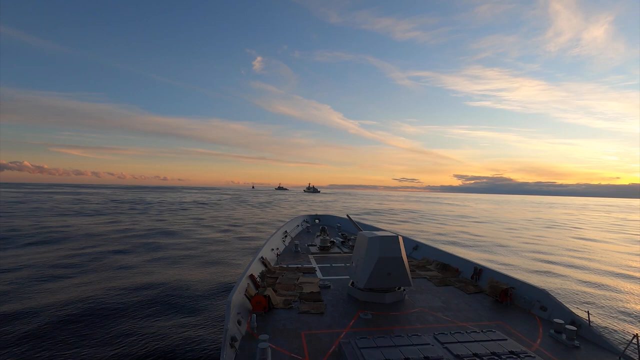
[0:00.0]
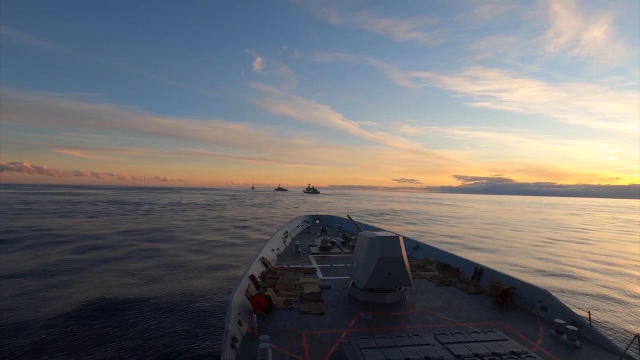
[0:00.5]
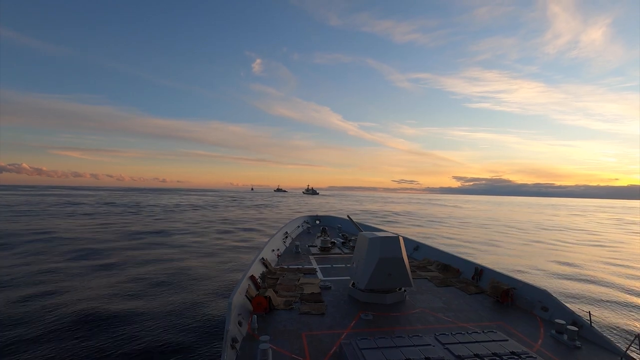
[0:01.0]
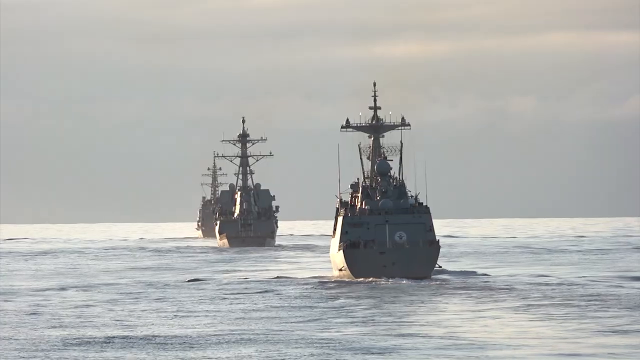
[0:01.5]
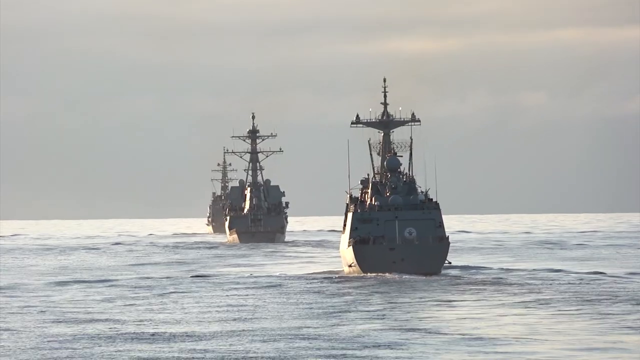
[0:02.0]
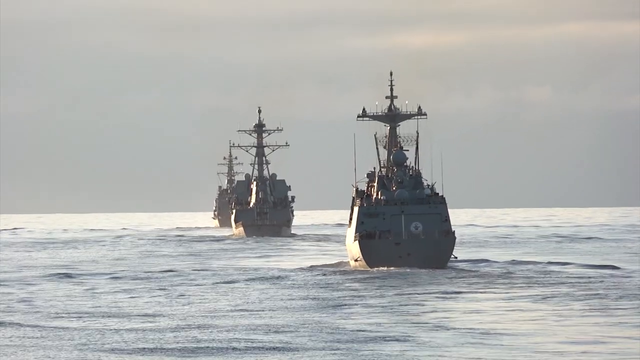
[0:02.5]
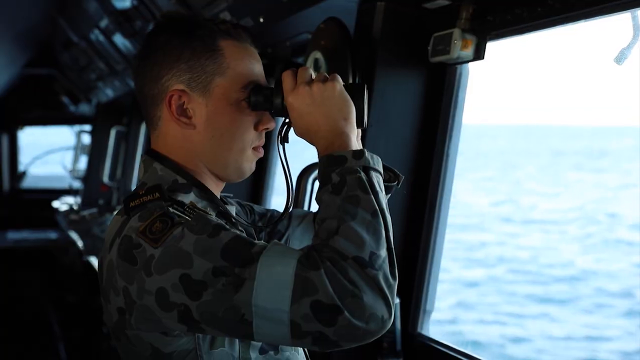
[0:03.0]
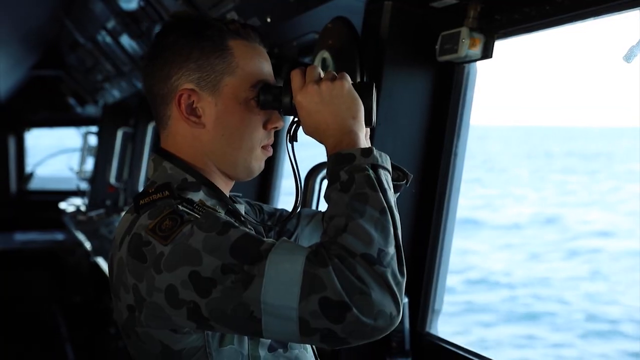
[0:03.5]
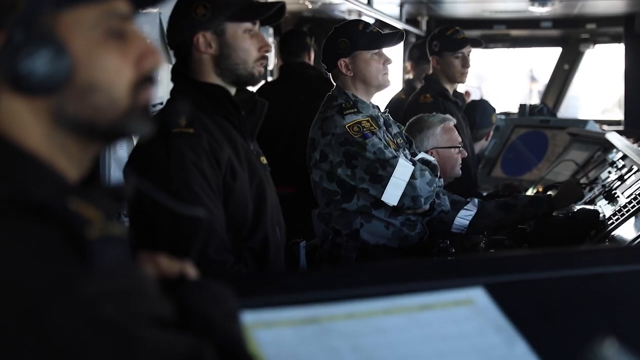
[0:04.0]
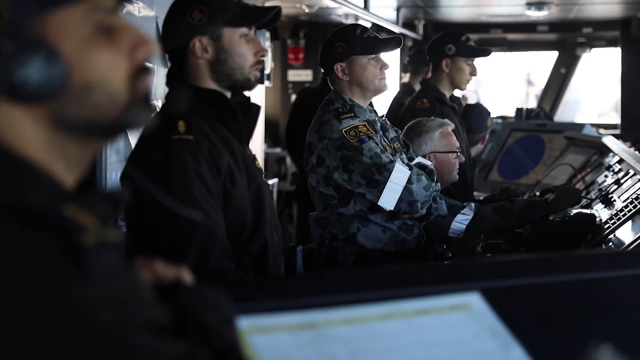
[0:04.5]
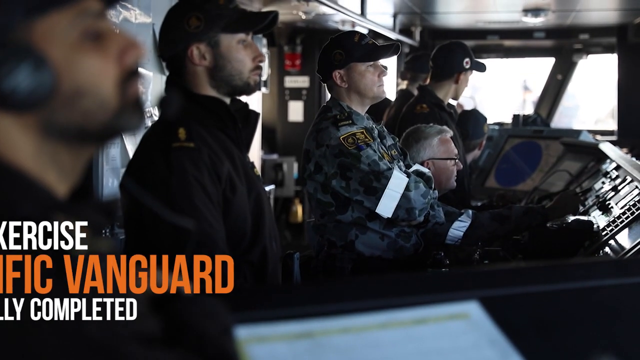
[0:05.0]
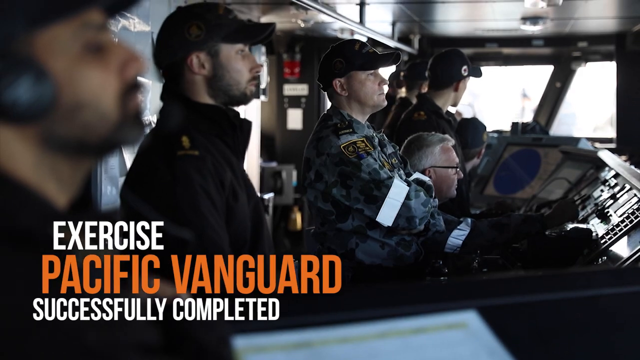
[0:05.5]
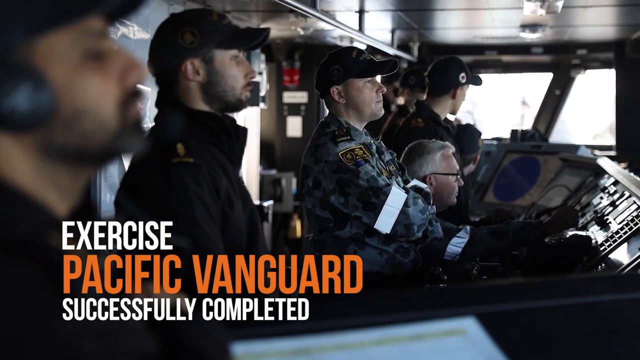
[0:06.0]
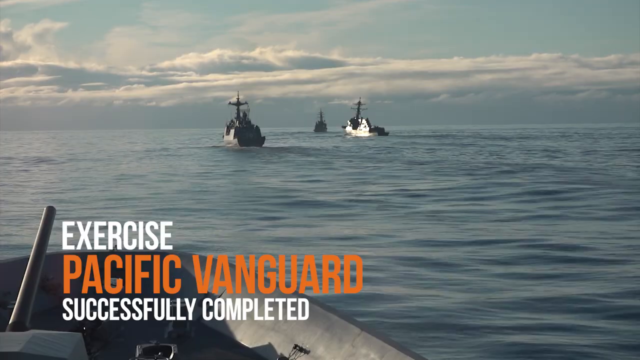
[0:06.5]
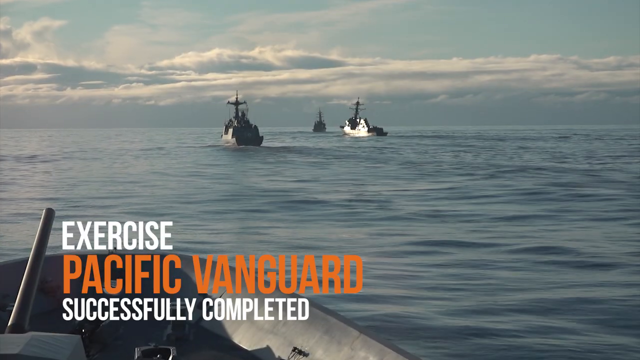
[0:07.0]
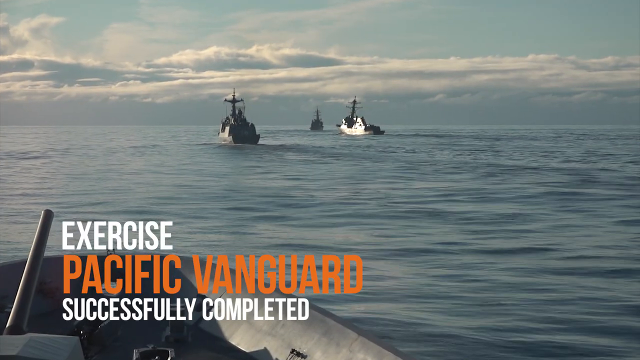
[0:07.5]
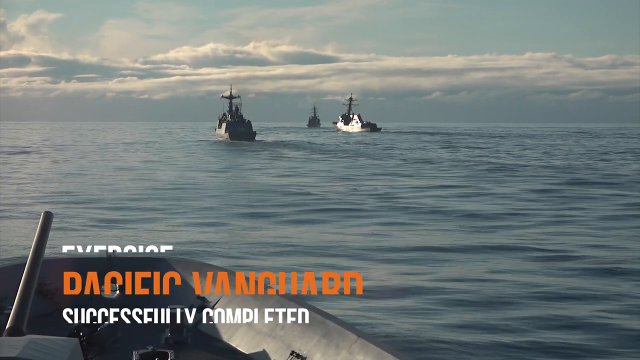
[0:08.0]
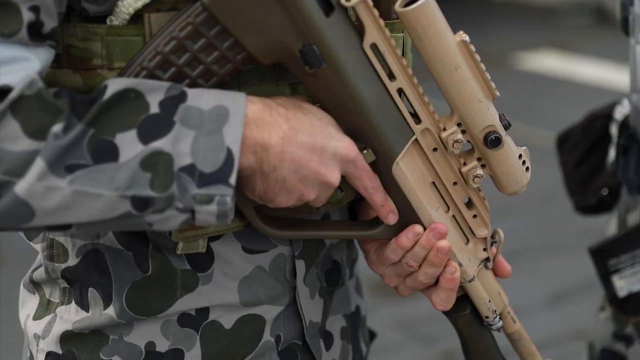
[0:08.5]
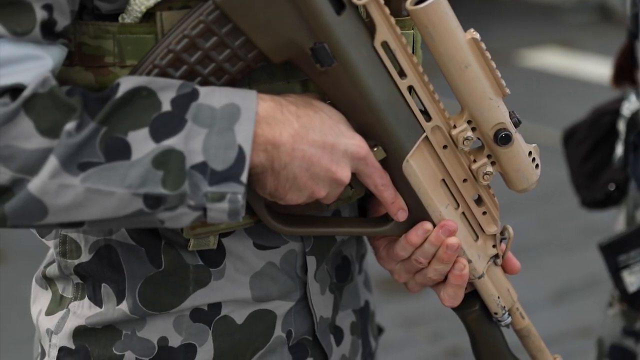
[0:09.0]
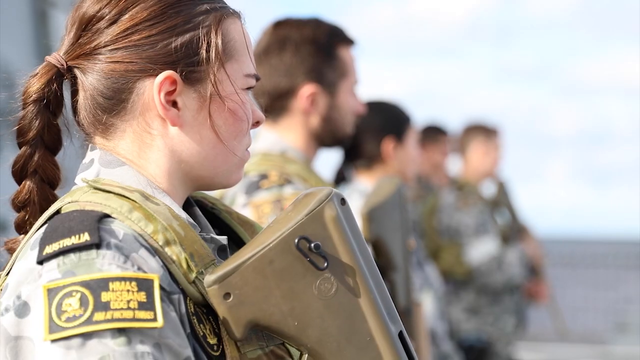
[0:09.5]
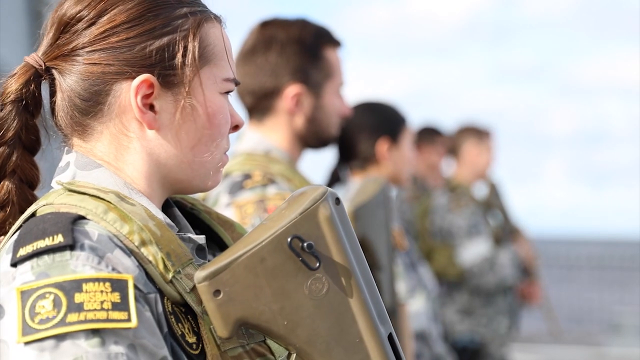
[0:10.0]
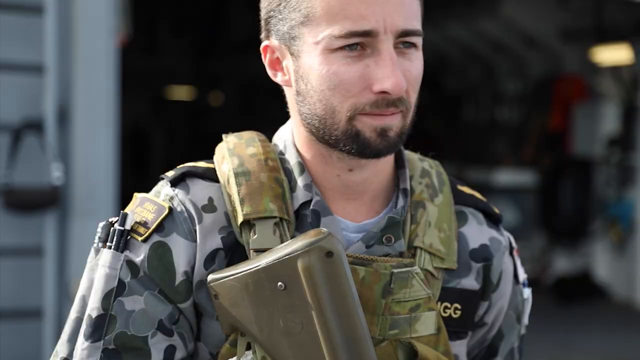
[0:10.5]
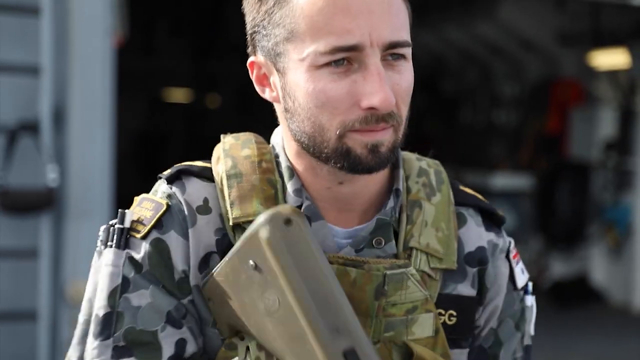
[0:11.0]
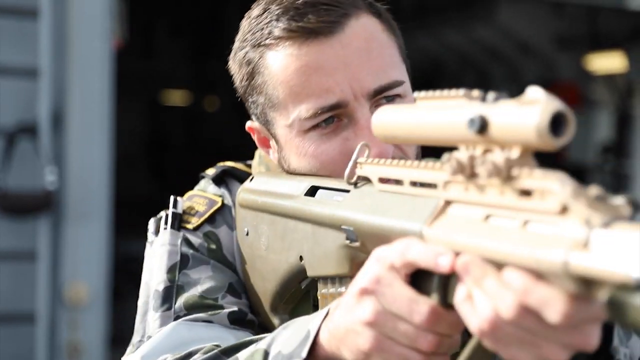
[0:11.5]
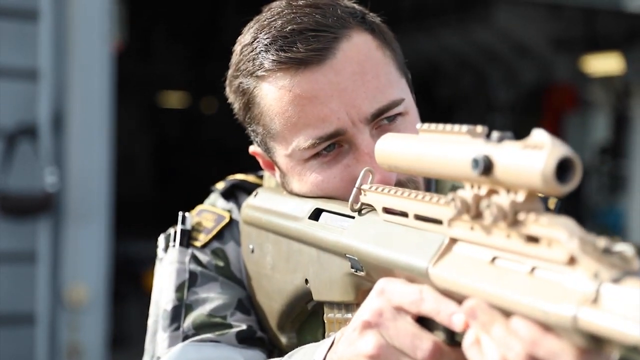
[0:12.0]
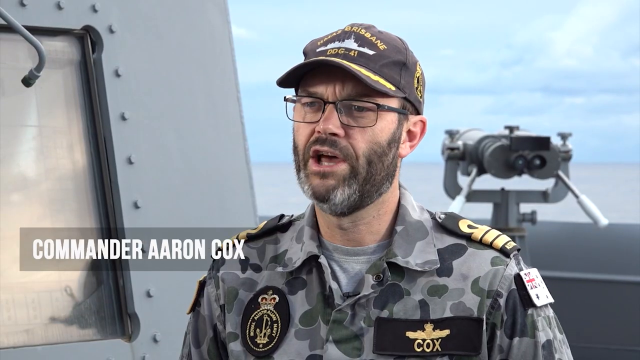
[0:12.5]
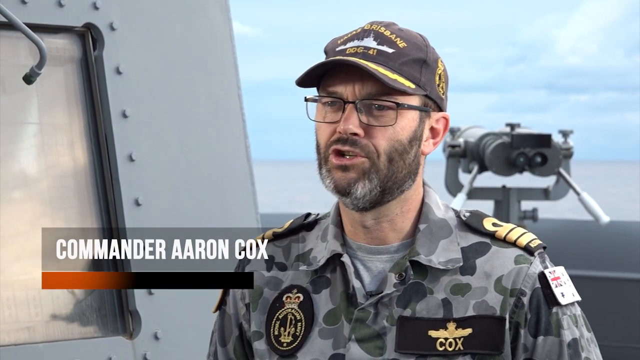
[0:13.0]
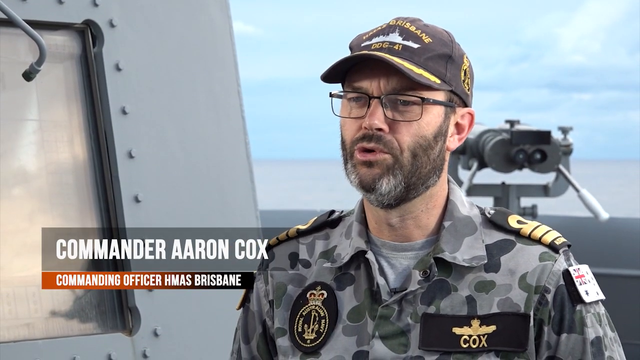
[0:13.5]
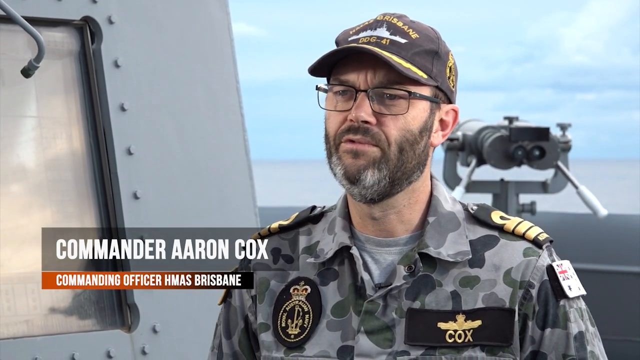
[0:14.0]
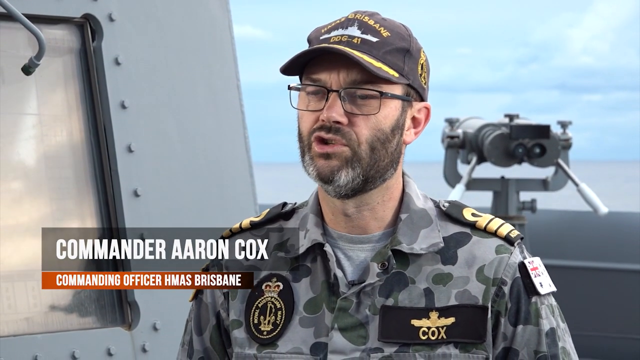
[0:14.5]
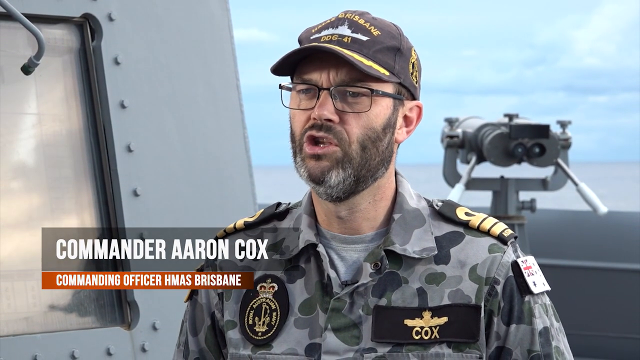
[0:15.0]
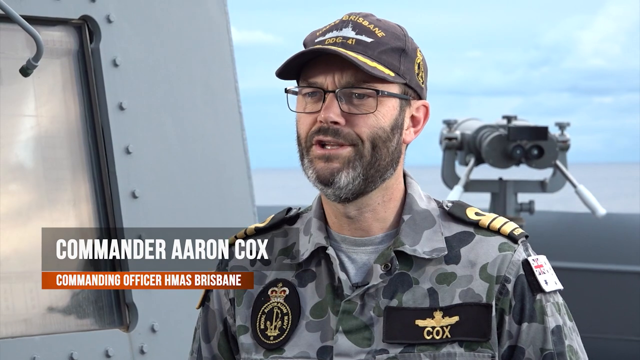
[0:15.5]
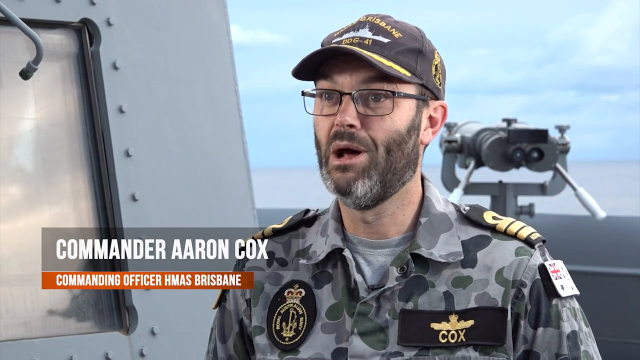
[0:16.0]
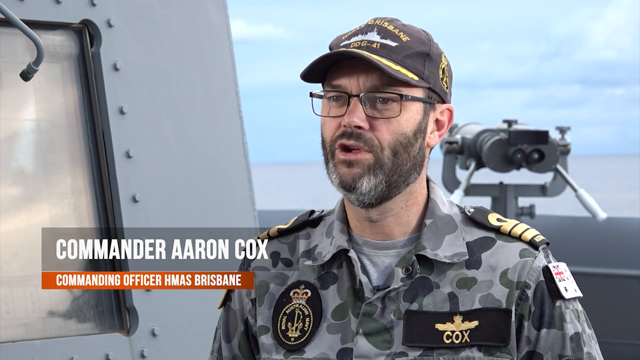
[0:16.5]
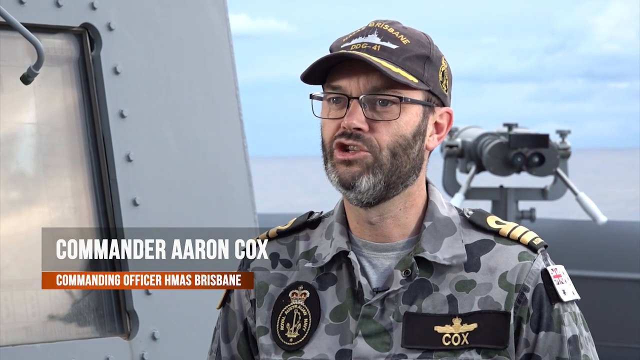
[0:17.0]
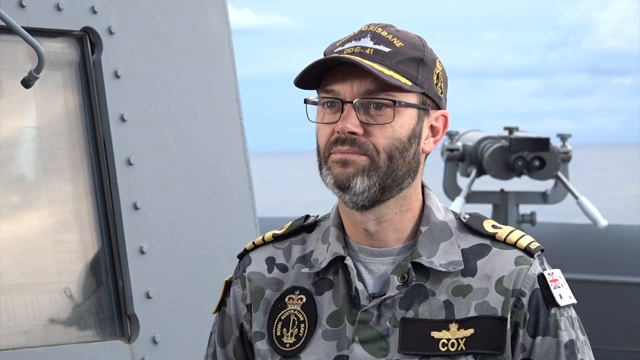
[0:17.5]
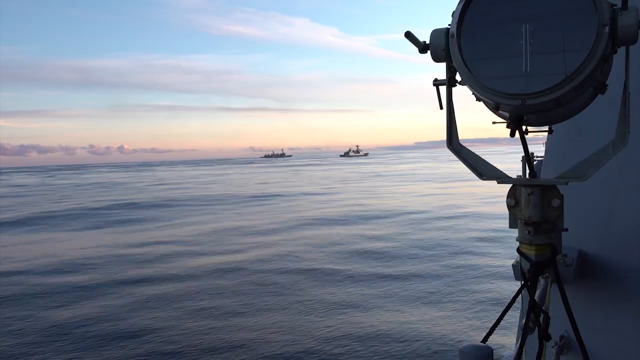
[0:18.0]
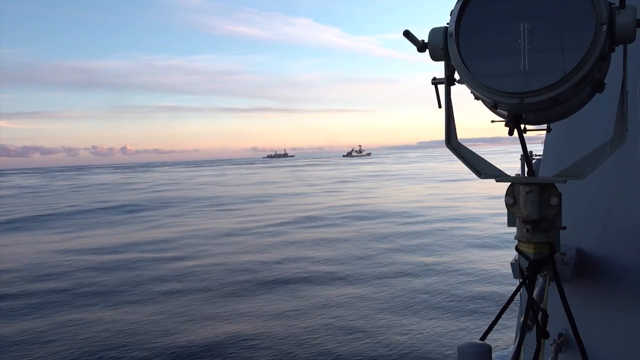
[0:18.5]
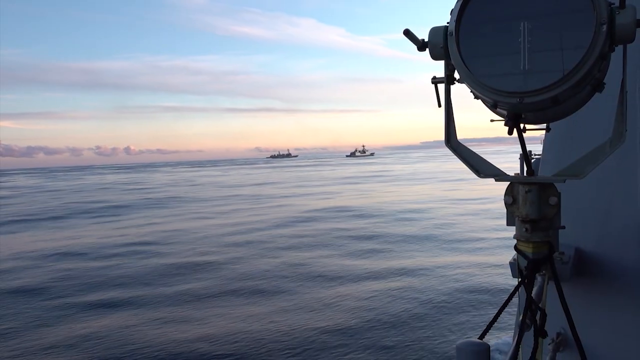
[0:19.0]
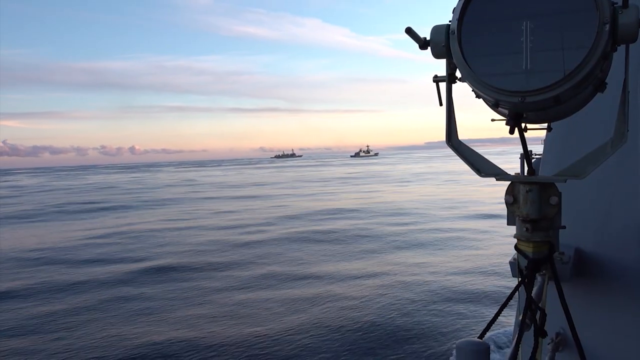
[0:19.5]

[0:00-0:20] The front of a ship is seen on the sea at what looks like dusk. The view moves to three boats, also on the sea, and then to a man looking through binoculars out of the window of a ship; he appears to be in army-type fatigues. Next come several men with caps on, all in uniforms, and a bridge area with a man sitting at it; on the same image, words come up reading "exercise pacific vanguard successfully completed". Outside again, several ships are on the sea. A white man, also in army-type fatigues, holds what looks like a sniper rifle, and then a female carries a similar gun, with several out-of-focus people in the background. A man looks through the sniper rifle. A man is then named as Commander Aaron Cox, with text saying he is the commanding officer of HMAS Brisbane, which seems to be a unit from Australia; he talks directly to the screen. The view returns to the sea with the ships on it.